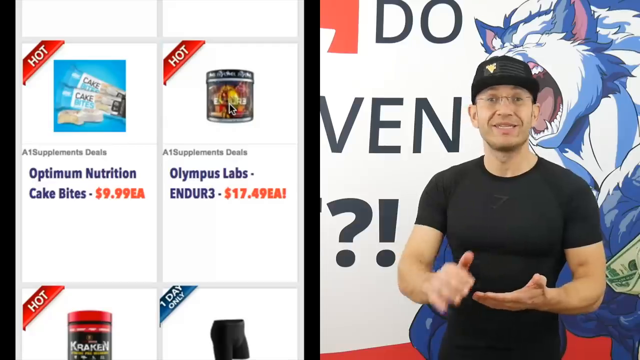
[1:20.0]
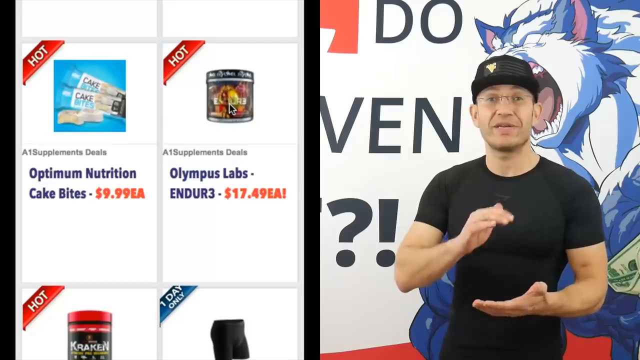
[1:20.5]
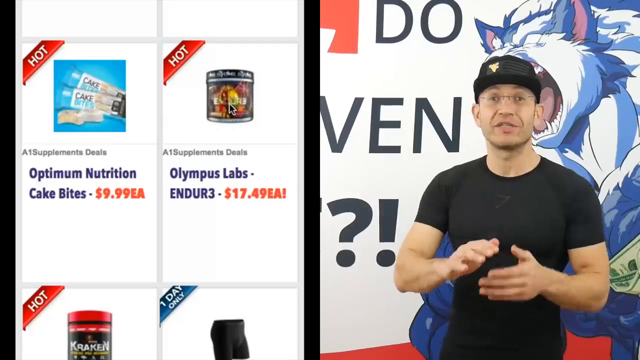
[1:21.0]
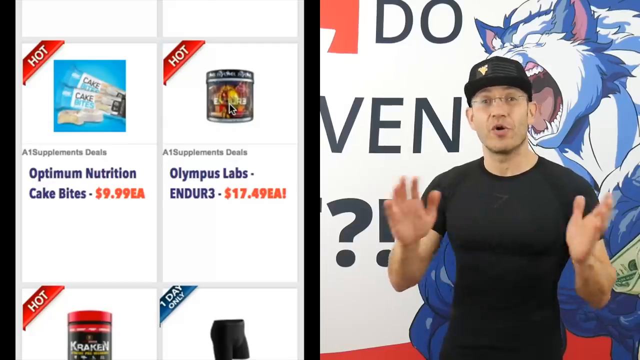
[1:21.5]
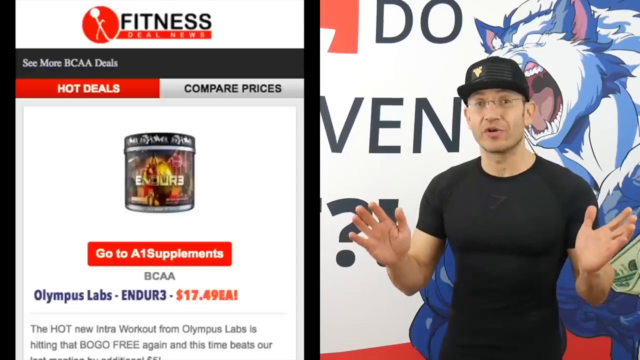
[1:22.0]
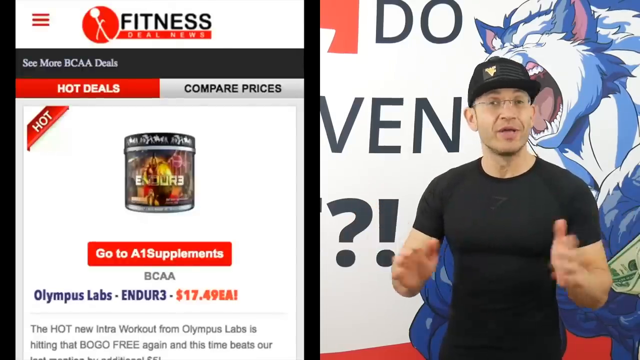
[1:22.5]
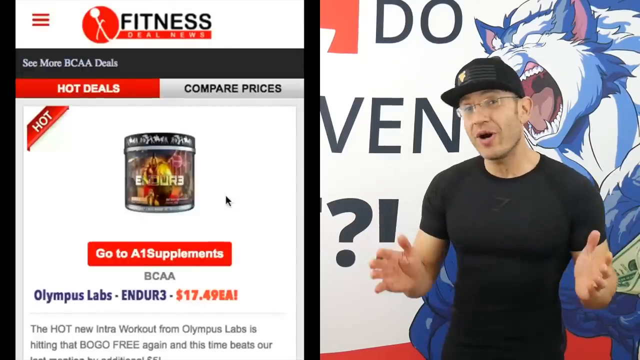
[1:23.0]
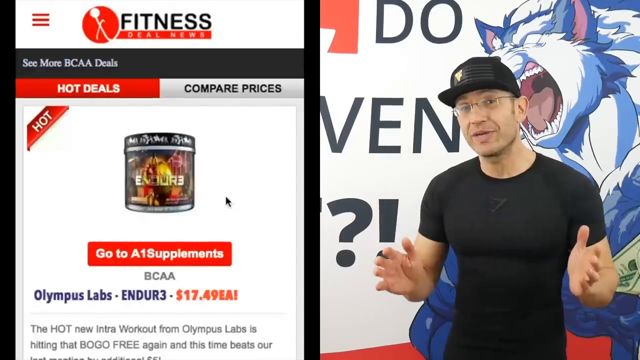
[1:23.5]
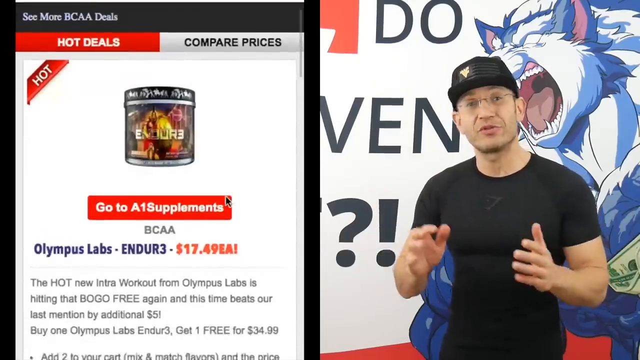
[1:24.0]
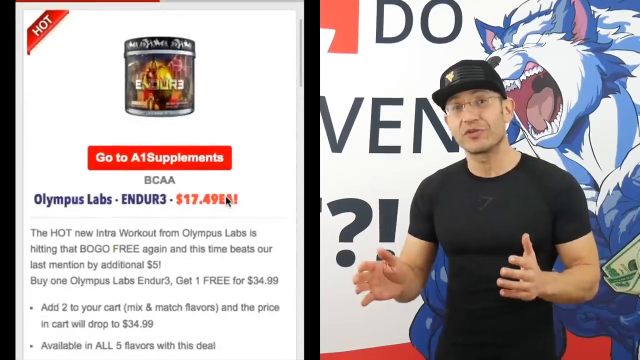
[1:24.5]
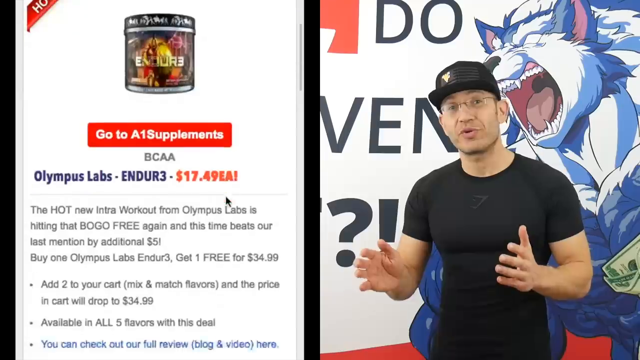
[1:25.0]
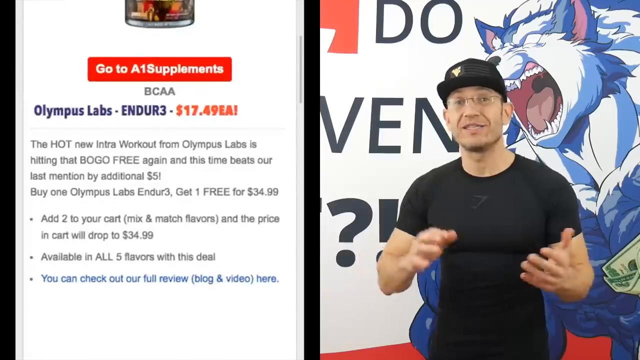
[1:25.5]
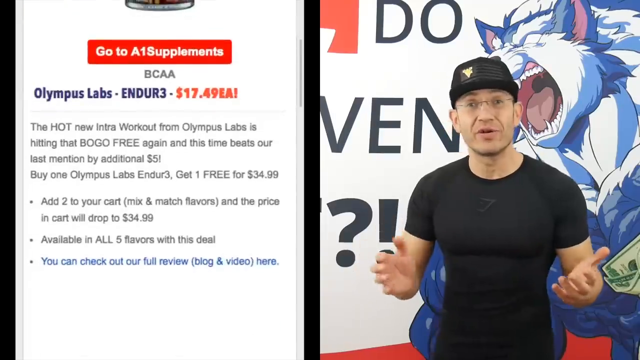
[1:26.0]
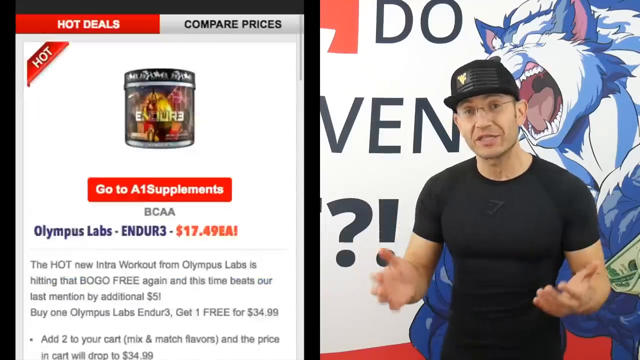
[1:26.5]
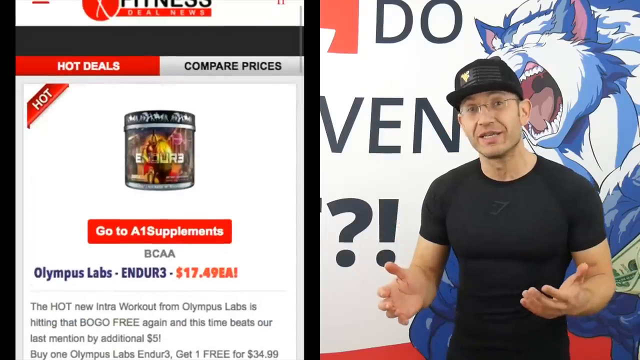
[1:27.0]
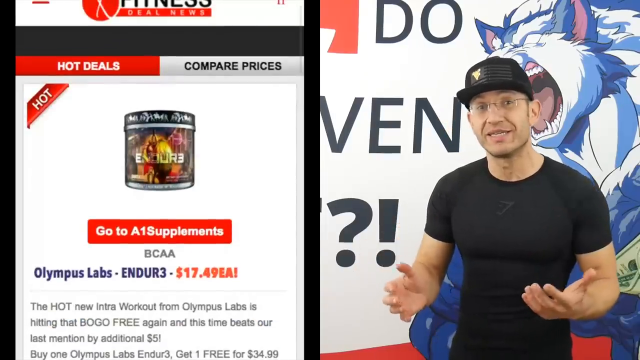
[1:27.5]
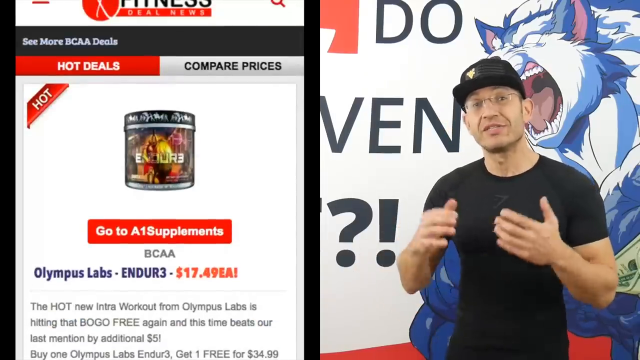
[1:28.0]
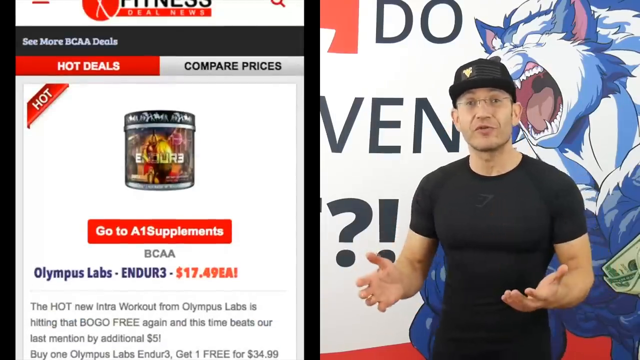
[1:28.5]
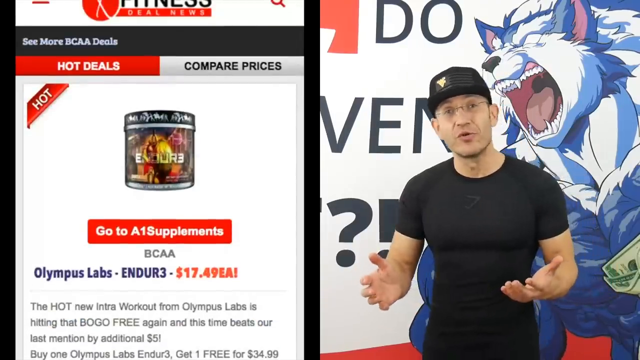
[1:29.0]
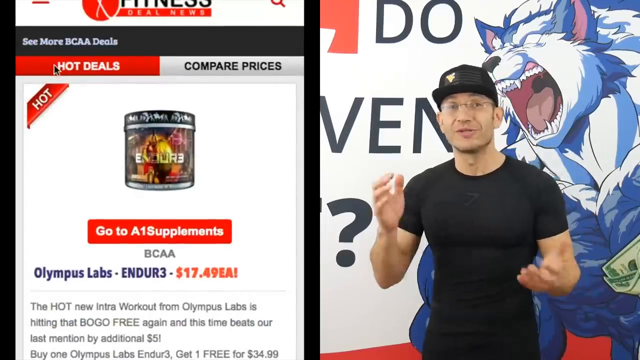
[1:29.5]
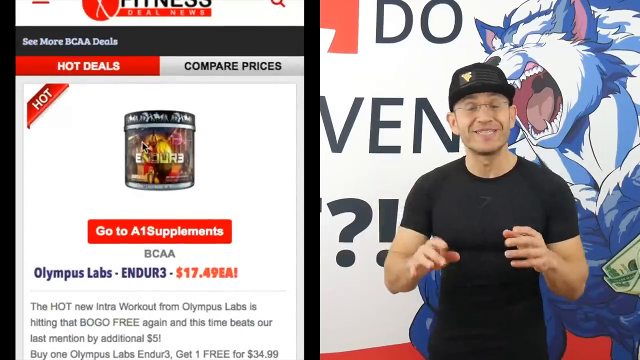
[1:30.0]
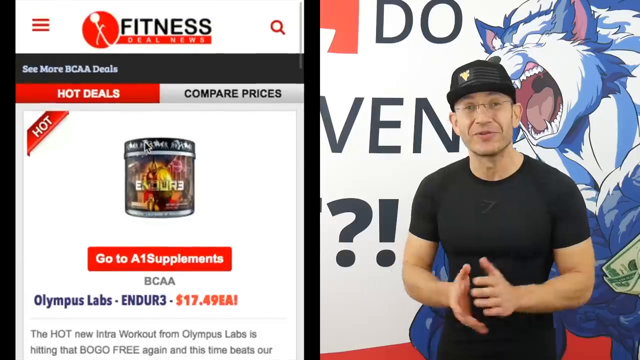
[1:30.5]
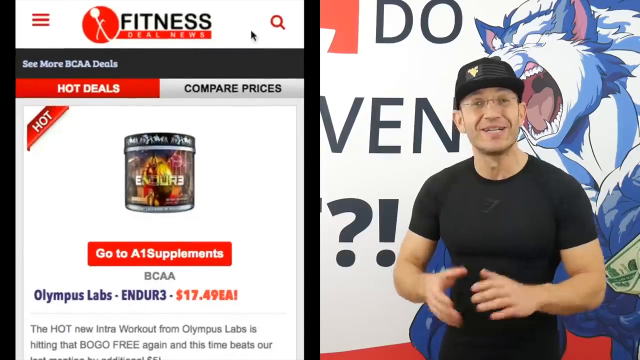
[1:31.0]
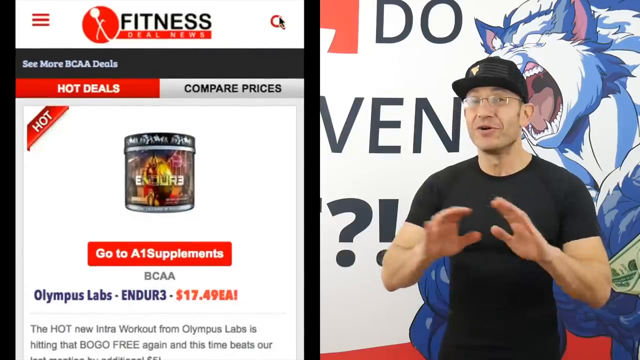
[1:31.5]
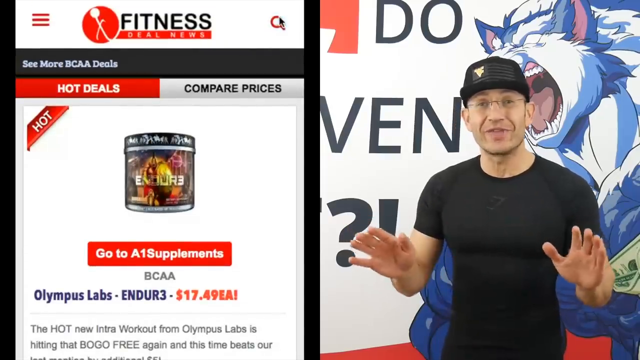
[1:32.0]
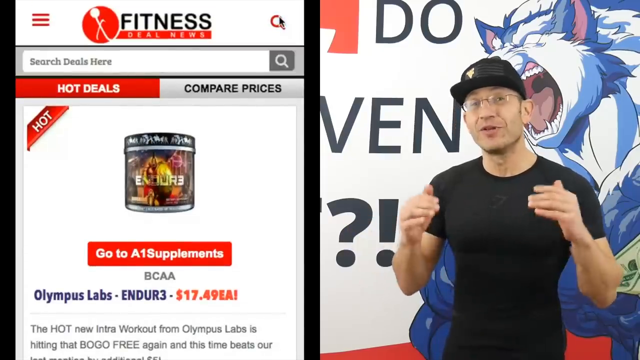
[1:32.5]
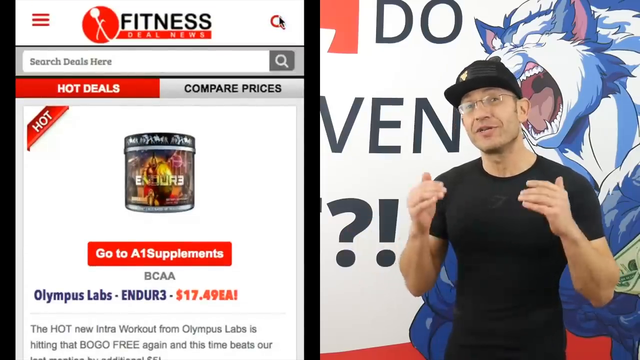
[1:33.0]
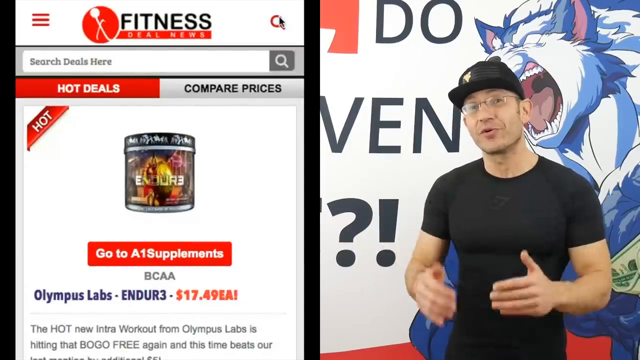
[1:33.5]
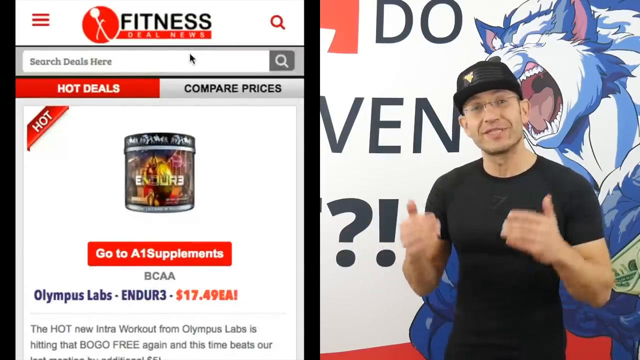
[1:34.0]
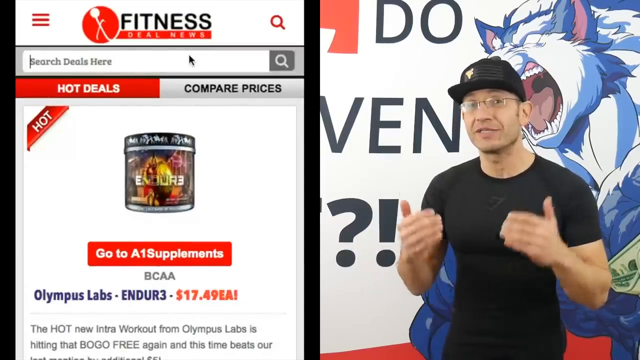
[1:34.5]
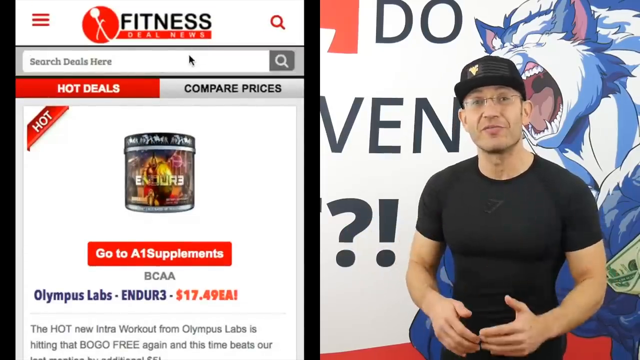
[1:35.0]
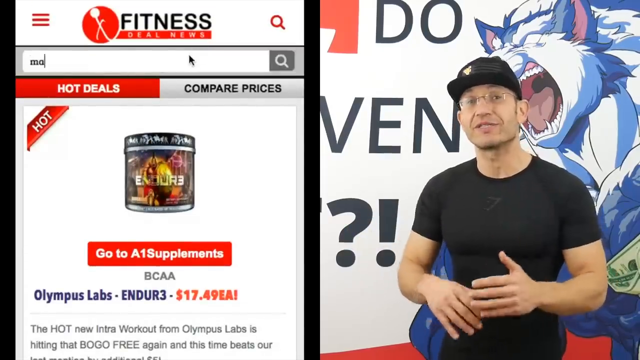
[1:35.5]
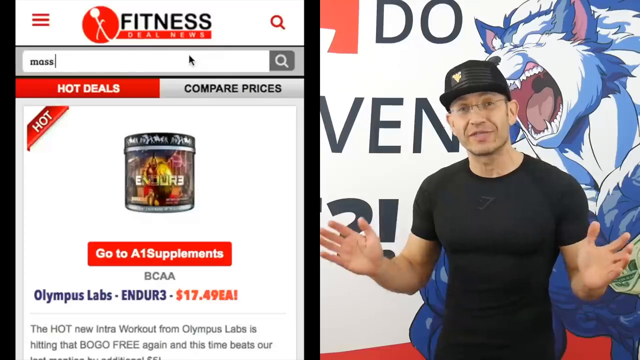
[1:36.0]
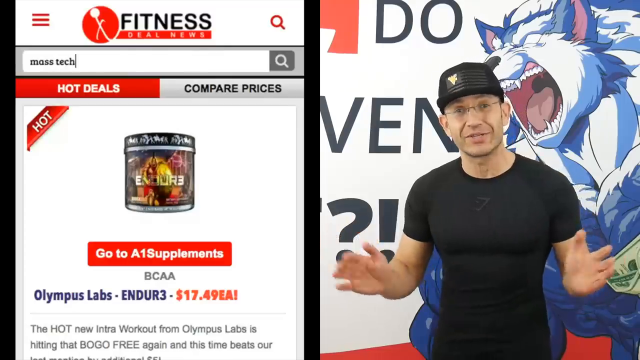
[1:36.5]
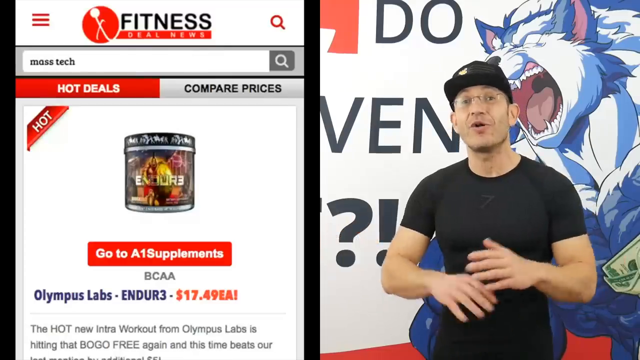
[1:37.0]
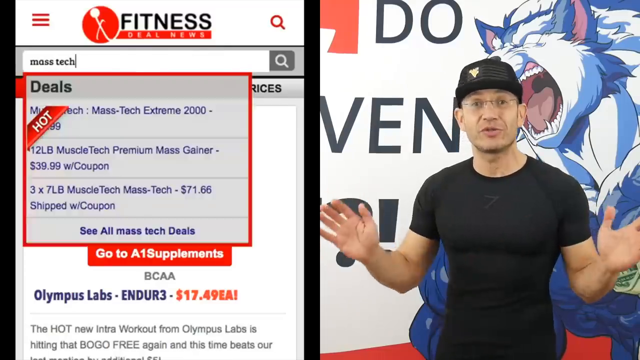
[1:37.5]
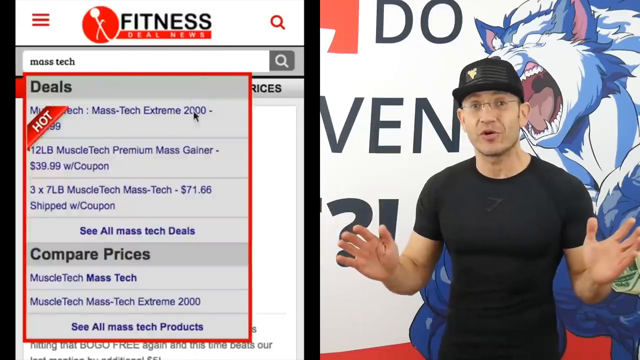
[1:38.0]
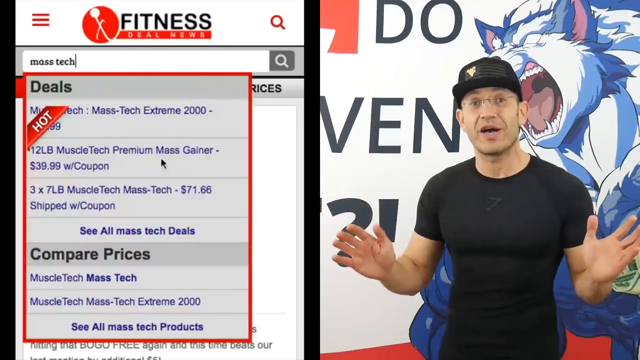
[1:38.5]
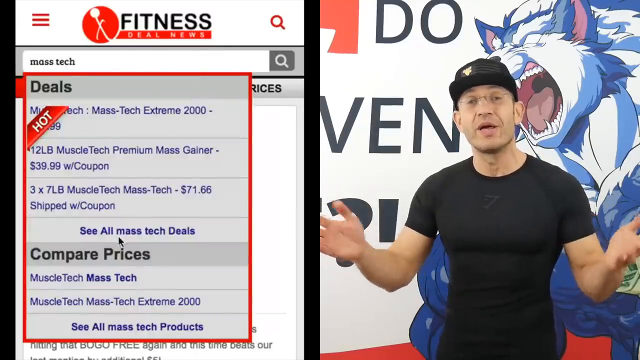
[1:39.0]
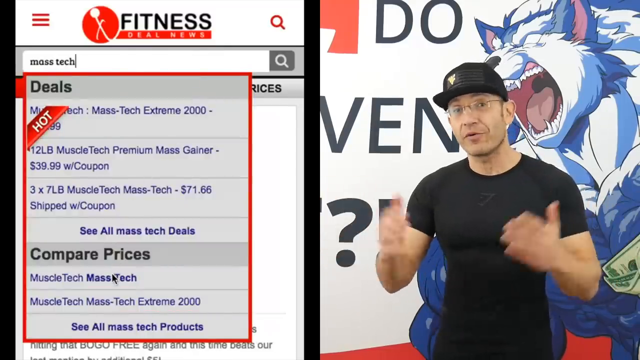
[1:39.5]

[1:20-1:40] A man stands on the right side of the screen, speaking directly to the camera. He wears a black t-shirt and a black hat and stands in front of a backdrop that looks like it has an animated illustration of a large, muscular, growling humanoid-like wolf. On the left side of the screen is a web page called Fitness Deal News showing fitness-related items for sale. At first someone scrolls down the page, and an item called Olympus Labs ENDUR3 is for sale for $17.49 each, listed under the Hot Deals tab. The cursor clicks on the search bar and someone types in "Mass Tech." A menu bar appears with items related to the search.